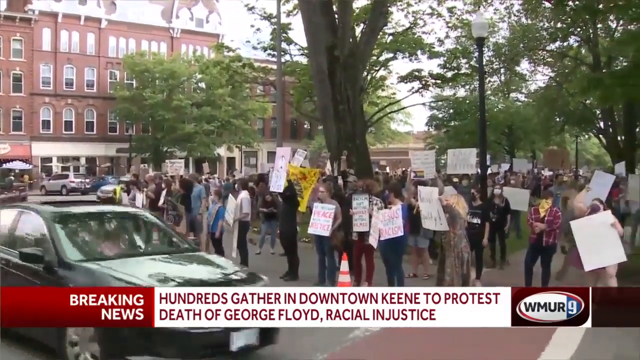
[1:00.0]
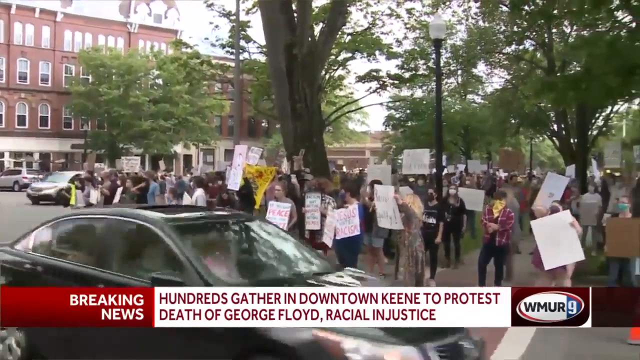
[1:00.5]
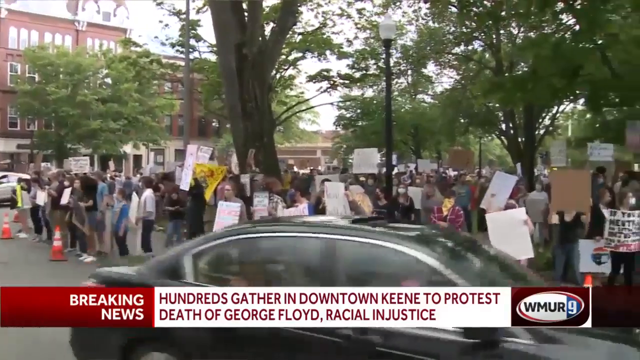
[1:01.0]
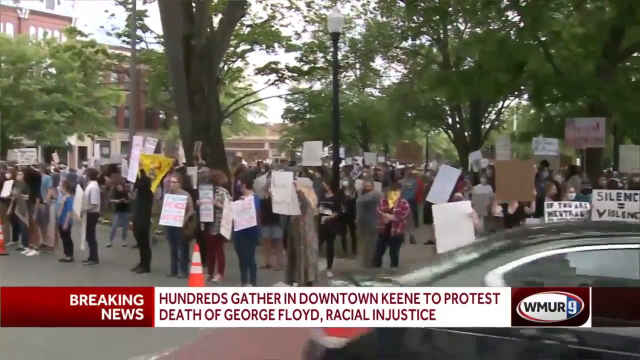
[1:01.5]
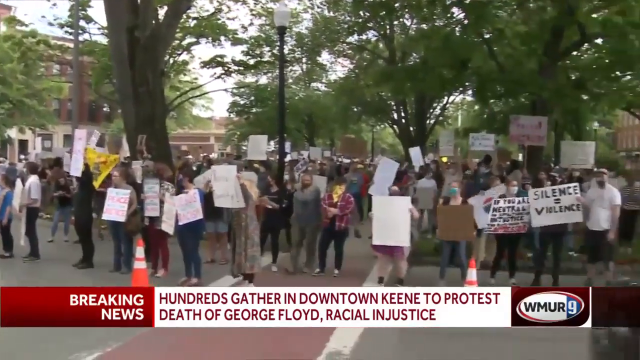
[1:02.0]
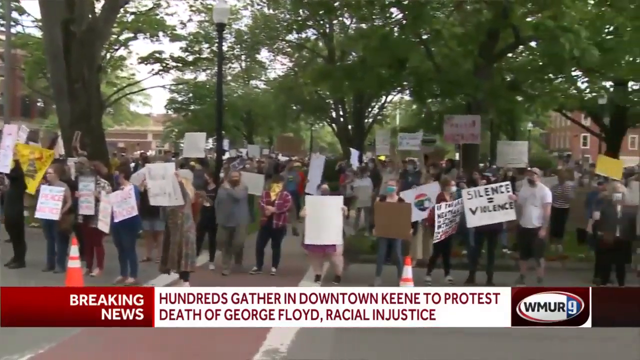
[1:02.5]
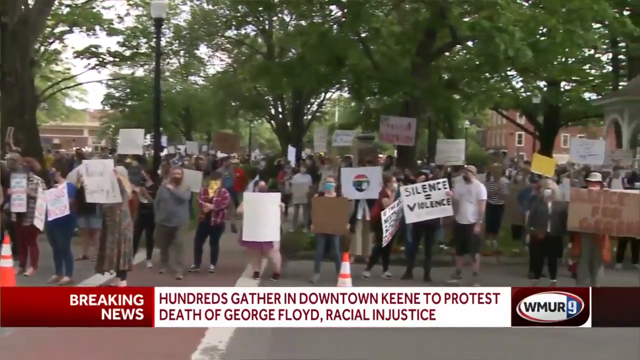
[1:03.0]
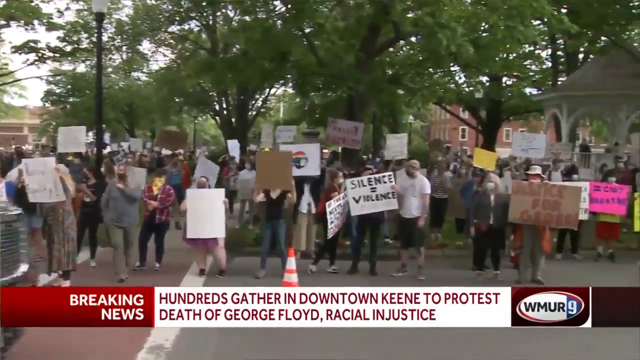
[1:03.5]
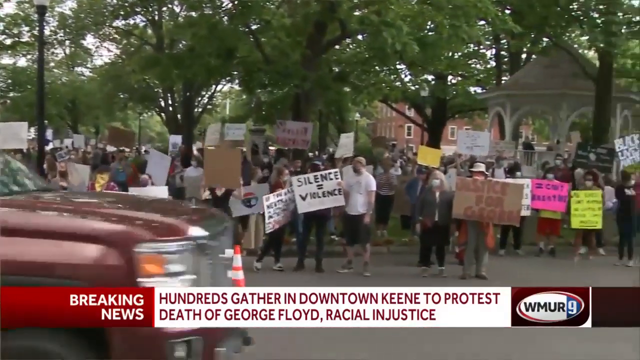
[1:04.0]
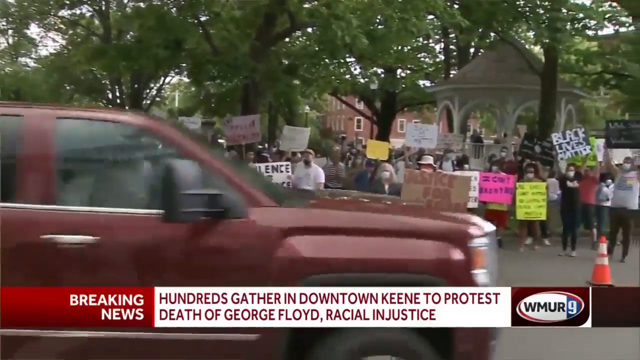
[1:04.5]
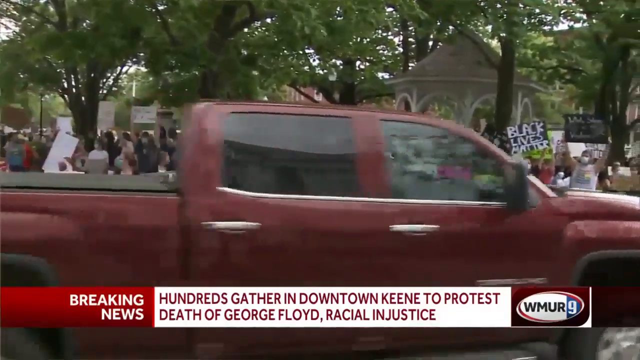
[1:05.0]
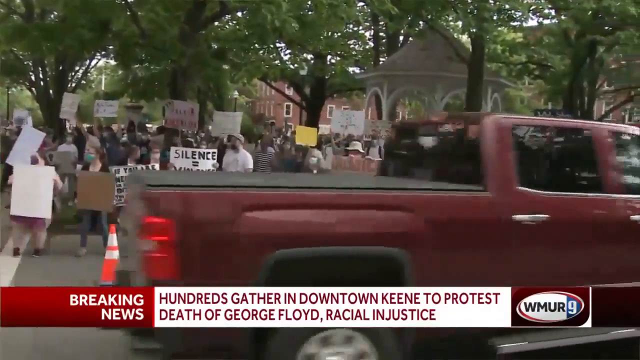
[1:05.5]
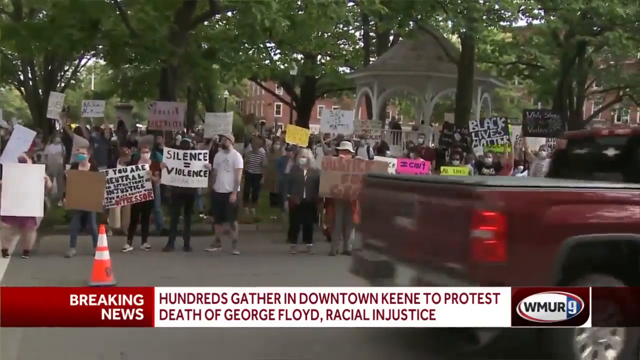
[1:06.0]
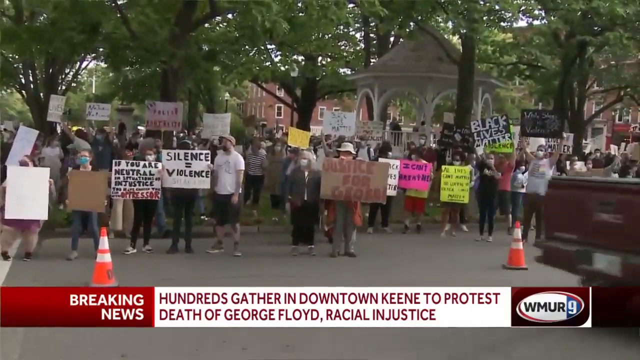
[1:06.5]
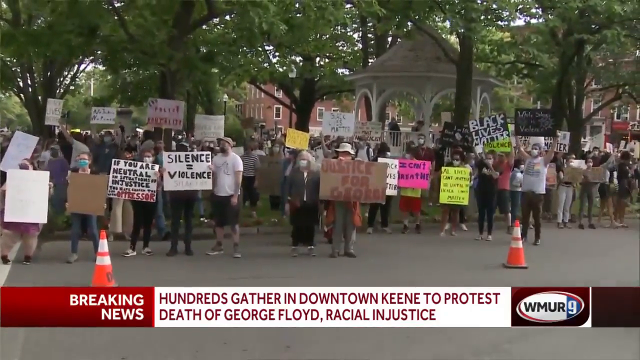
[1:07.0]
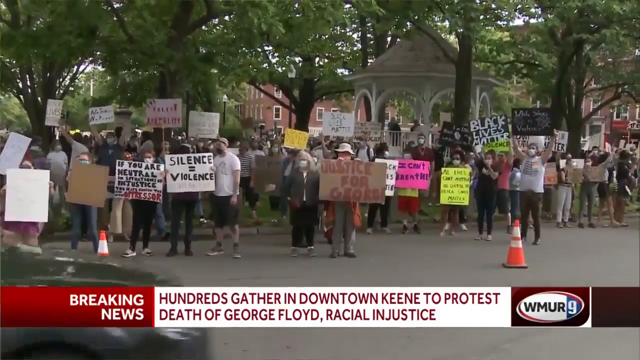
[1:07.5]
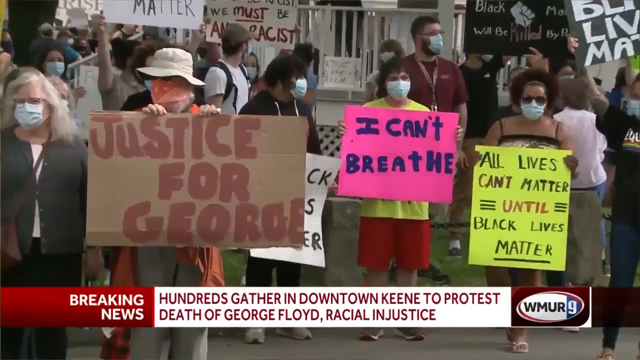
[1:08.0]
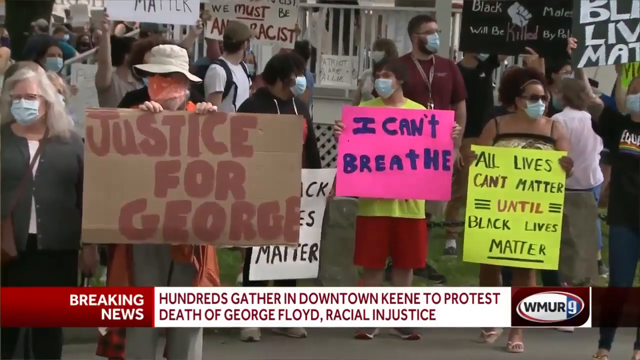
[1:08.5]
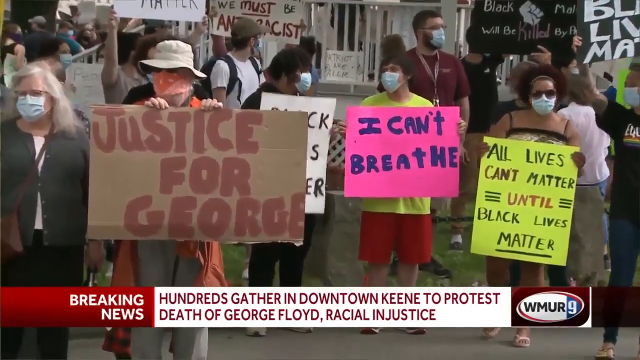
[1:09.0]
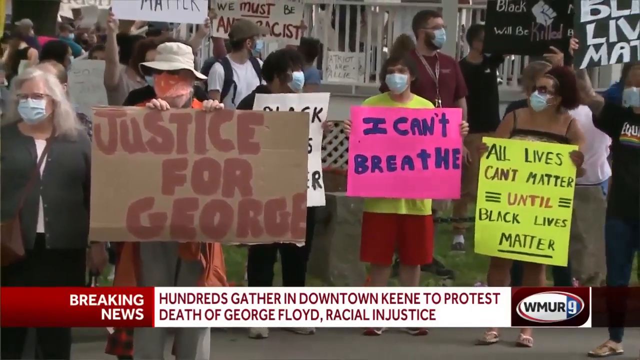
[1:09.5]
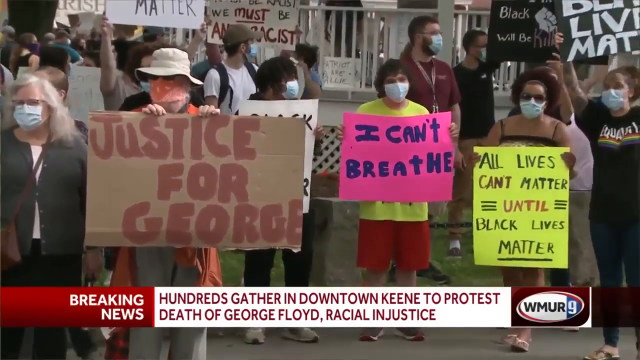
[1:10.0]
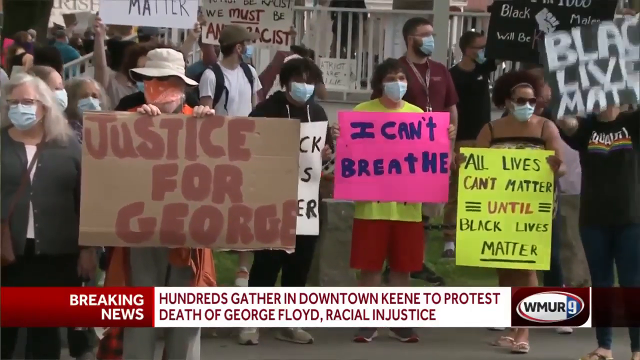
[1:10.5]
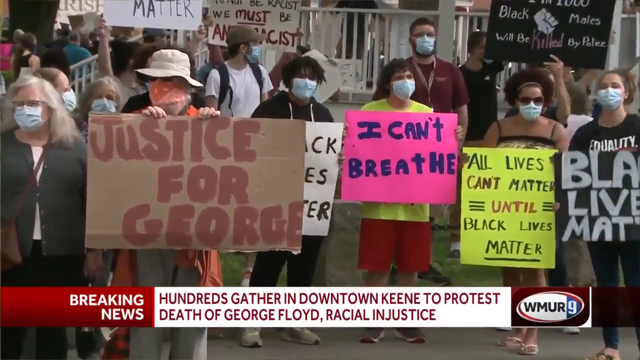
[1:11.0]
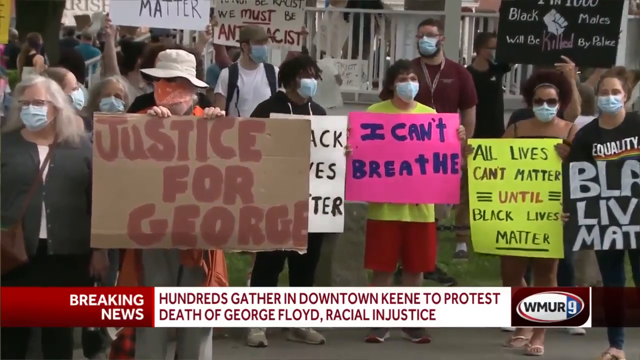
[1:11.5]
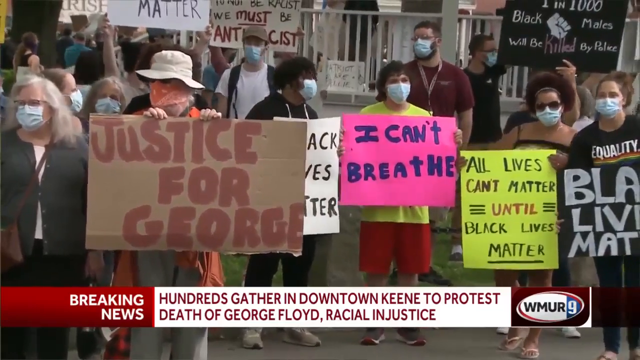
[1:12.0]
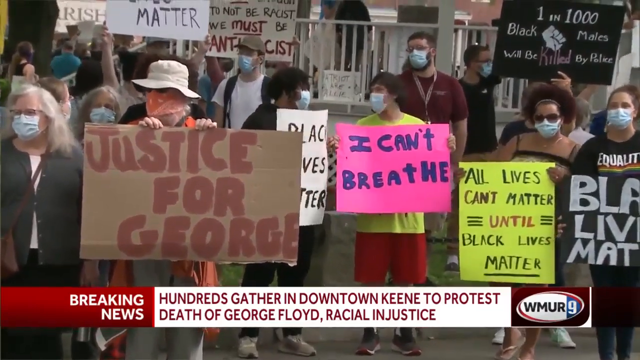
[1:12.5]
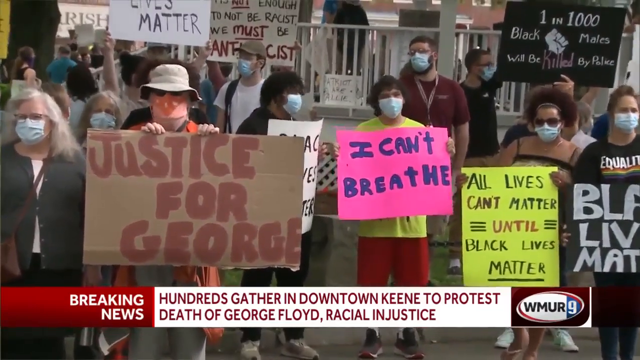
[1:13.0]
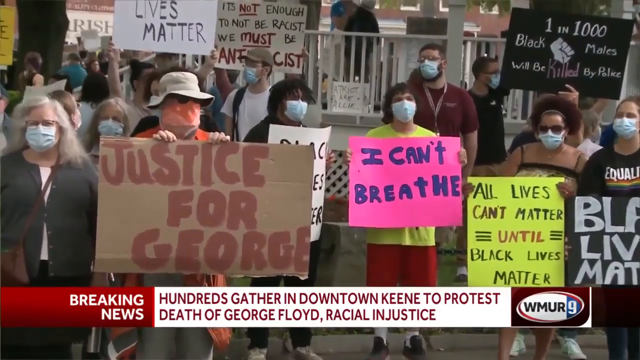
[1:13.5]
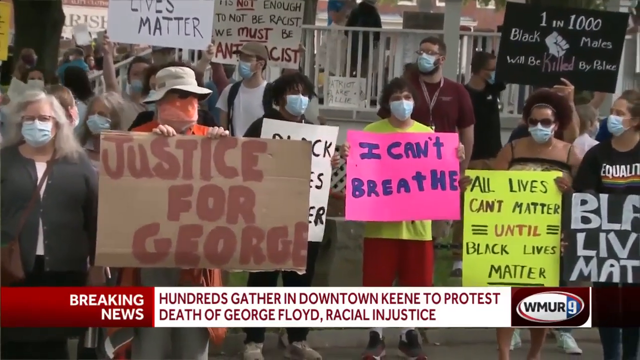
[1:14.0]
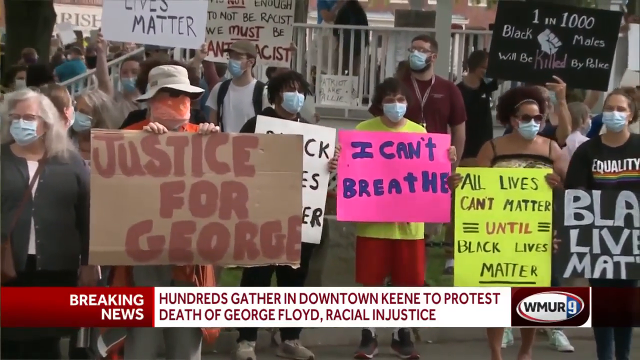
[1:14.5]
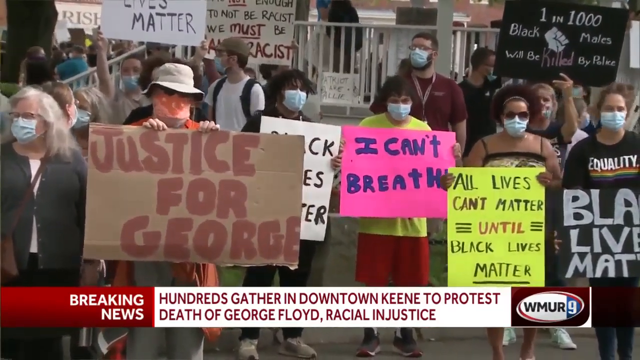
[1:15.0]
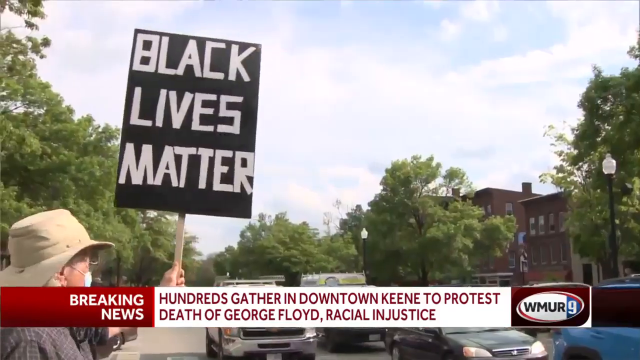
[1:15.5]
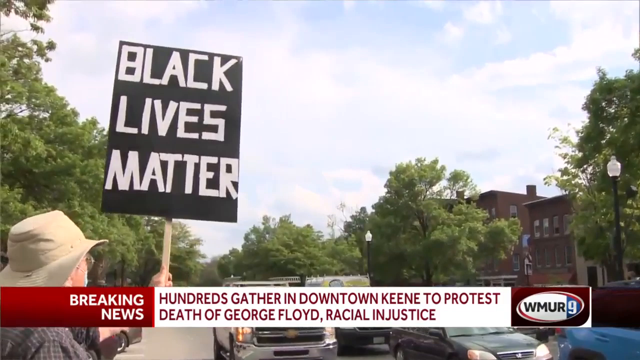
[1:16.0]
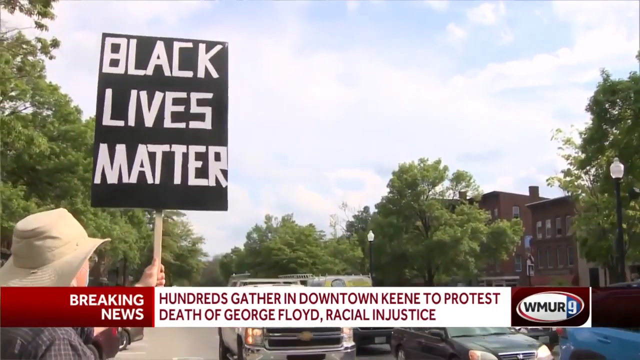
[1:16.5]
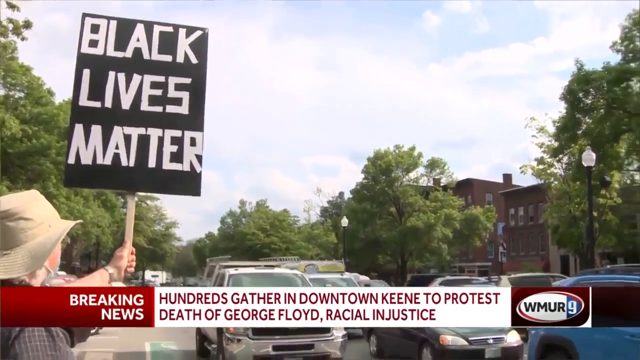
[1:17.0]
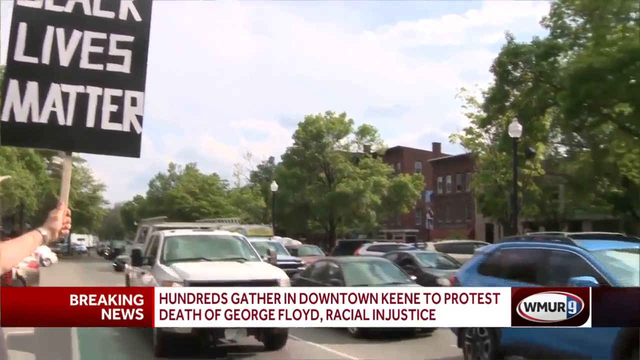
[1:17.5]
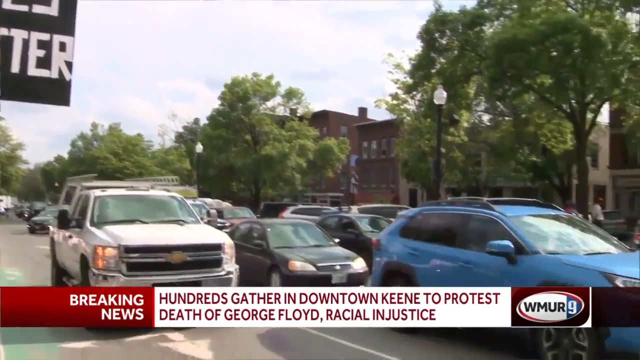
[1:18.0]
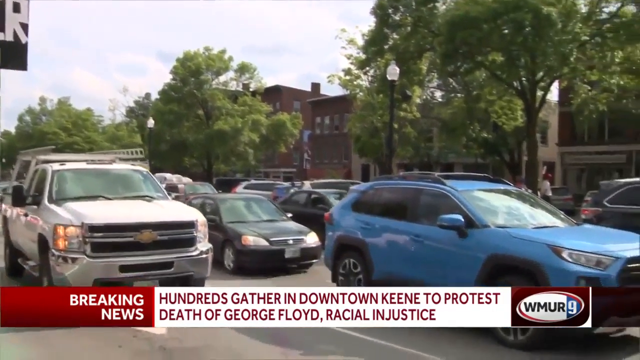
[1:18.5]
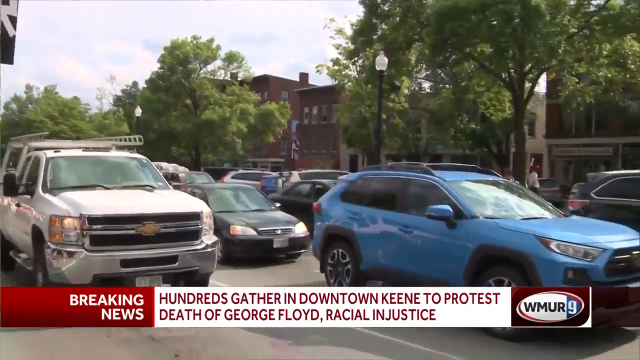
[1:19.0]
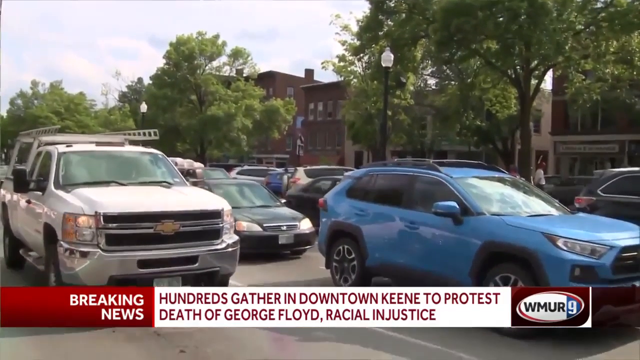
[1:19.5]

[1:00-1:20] Hundreds of people are gathered in downtown King to protest the death of George Floyd. Protesters have postcards with messages such as "let us spread love until we drown the hate," "Black Lives Matter," "silence is violence," "you are part of the problem," "justice for George," "I can't breathe" and "equality." The protest is mostly attended by white people standing.